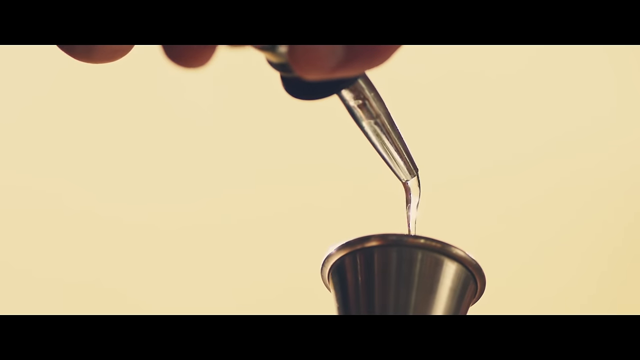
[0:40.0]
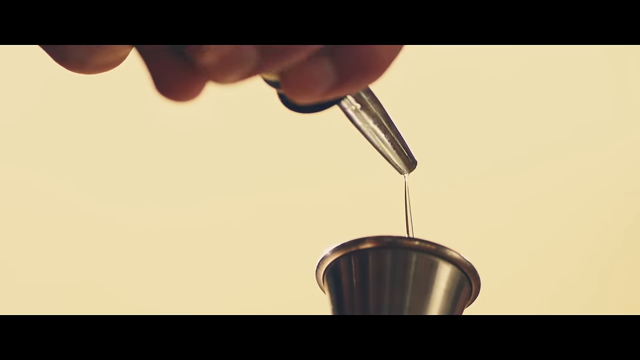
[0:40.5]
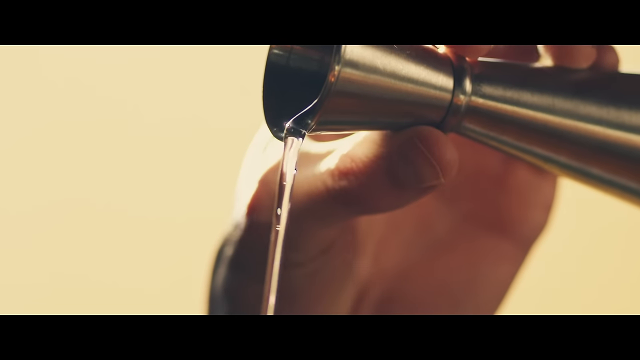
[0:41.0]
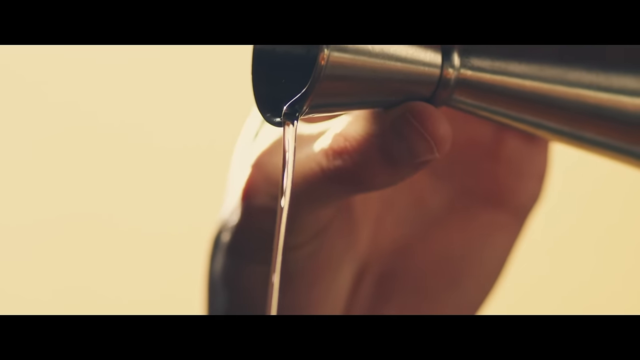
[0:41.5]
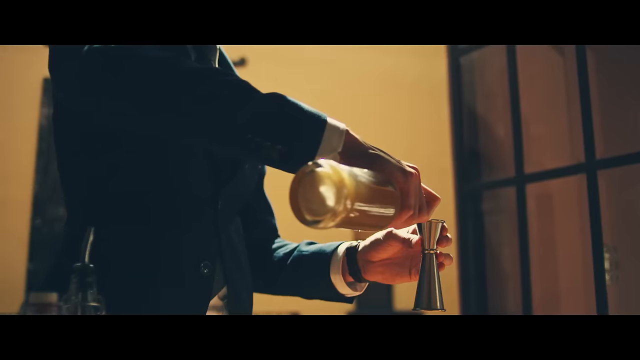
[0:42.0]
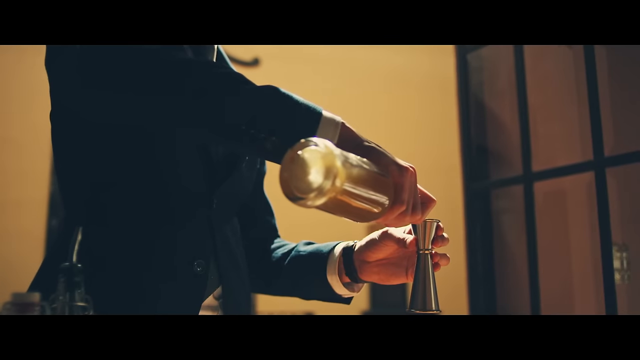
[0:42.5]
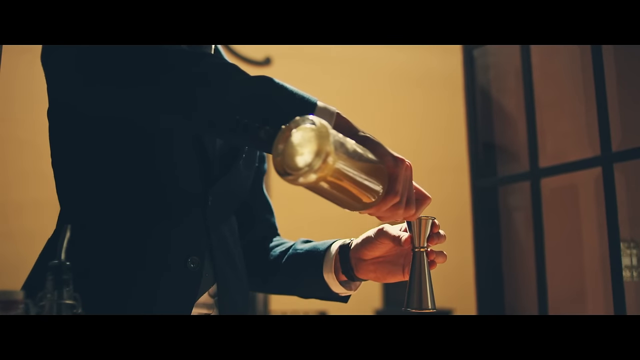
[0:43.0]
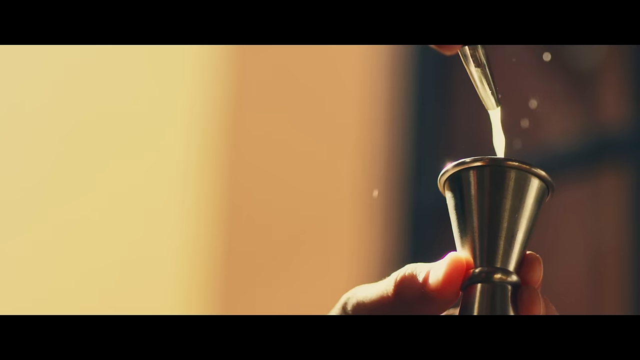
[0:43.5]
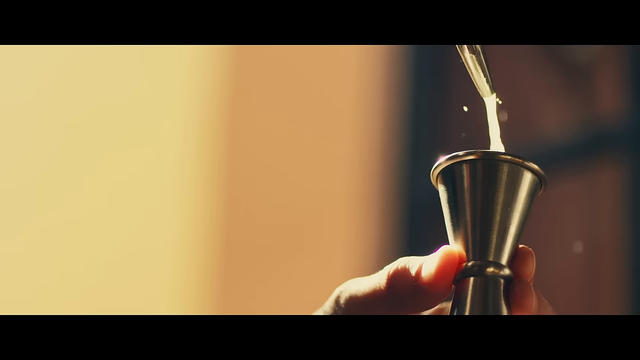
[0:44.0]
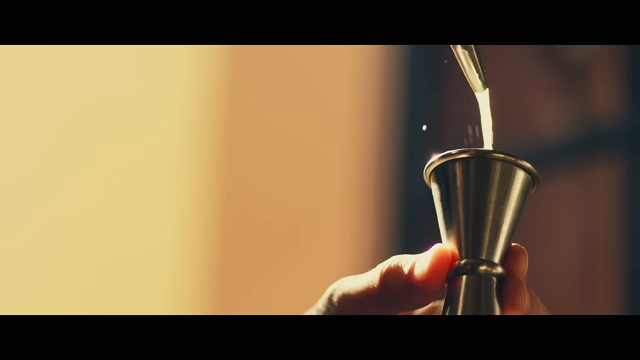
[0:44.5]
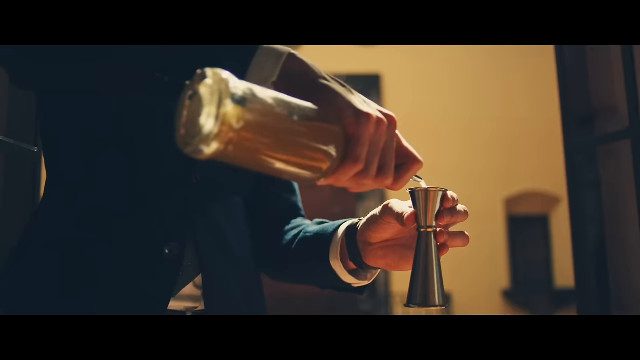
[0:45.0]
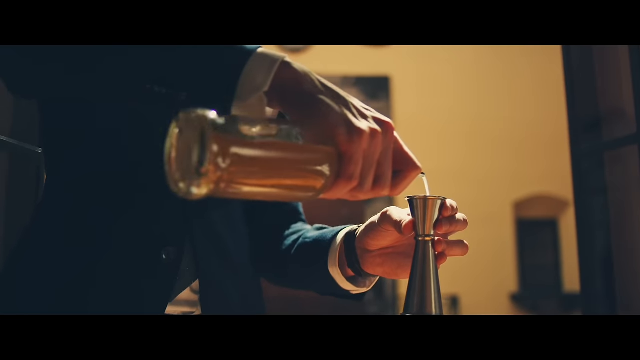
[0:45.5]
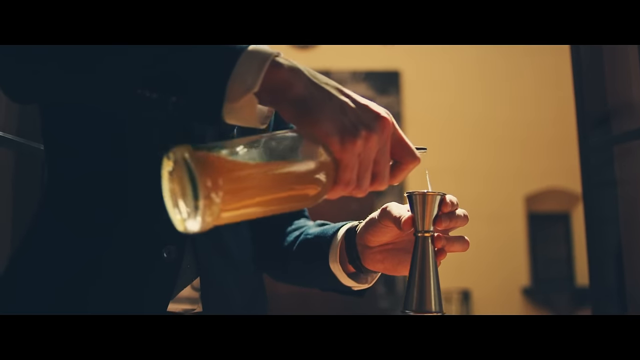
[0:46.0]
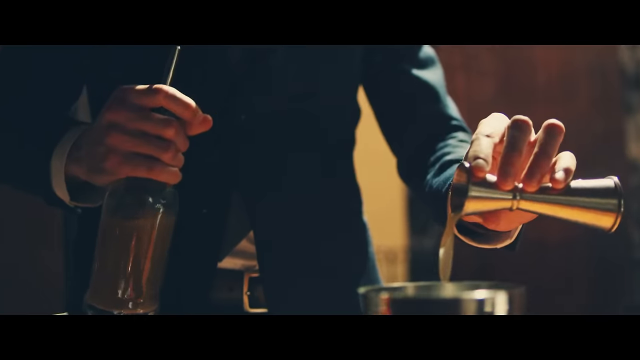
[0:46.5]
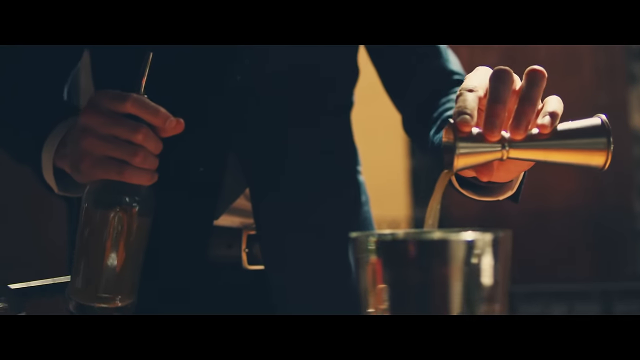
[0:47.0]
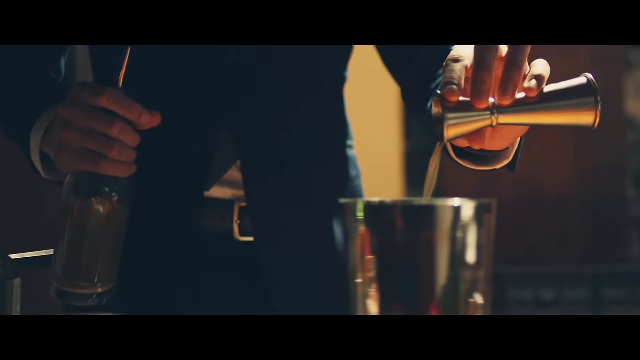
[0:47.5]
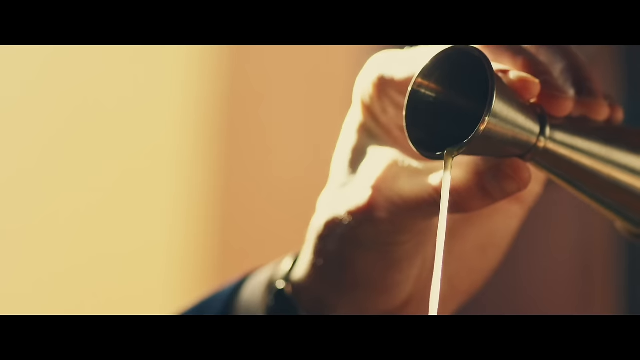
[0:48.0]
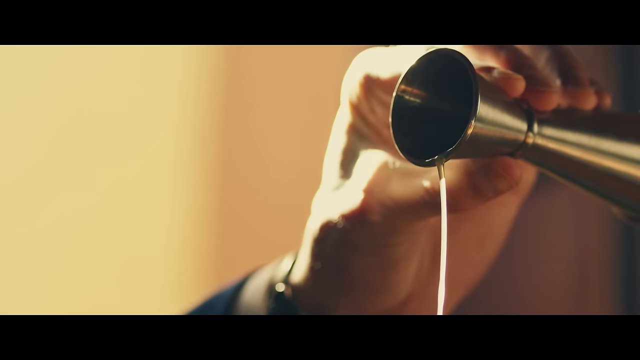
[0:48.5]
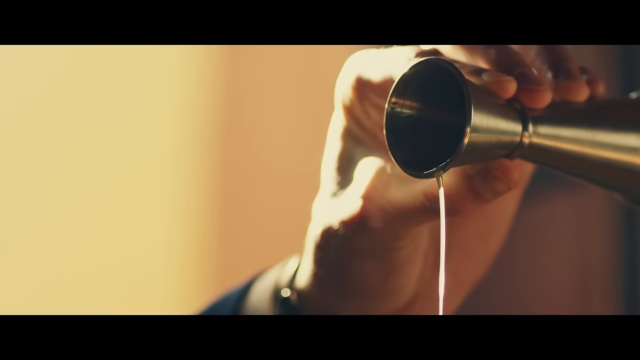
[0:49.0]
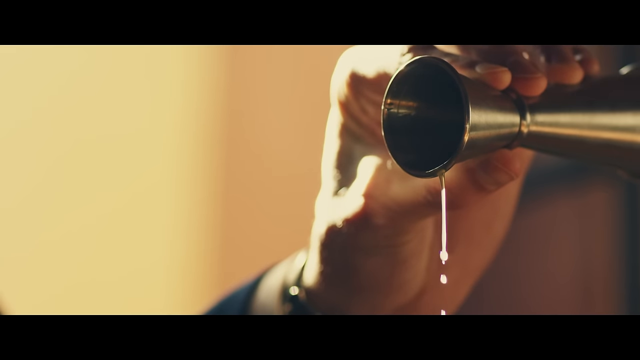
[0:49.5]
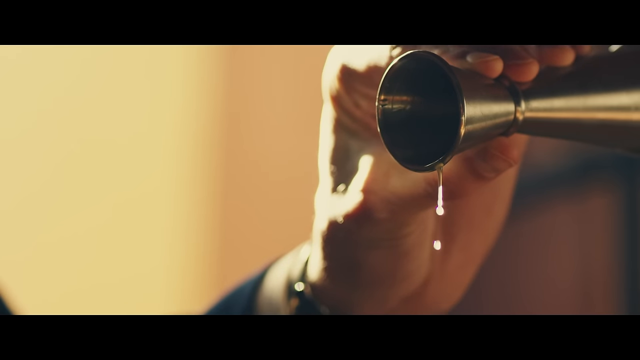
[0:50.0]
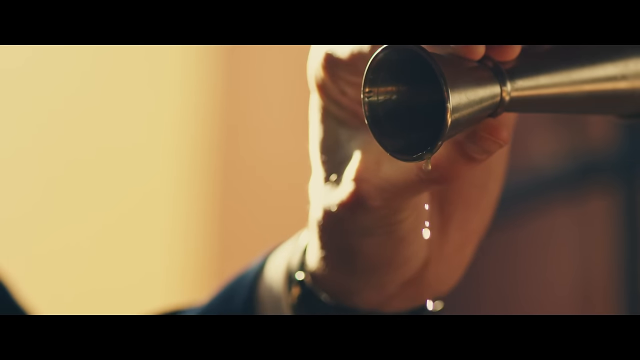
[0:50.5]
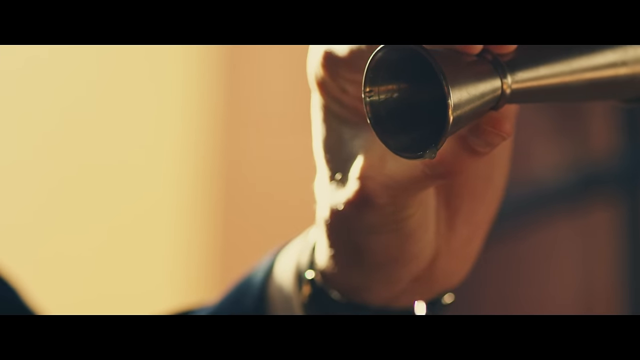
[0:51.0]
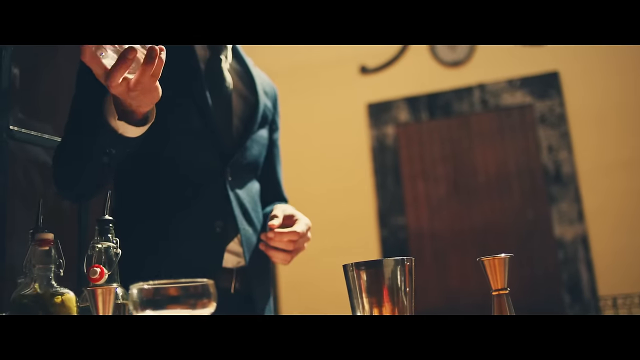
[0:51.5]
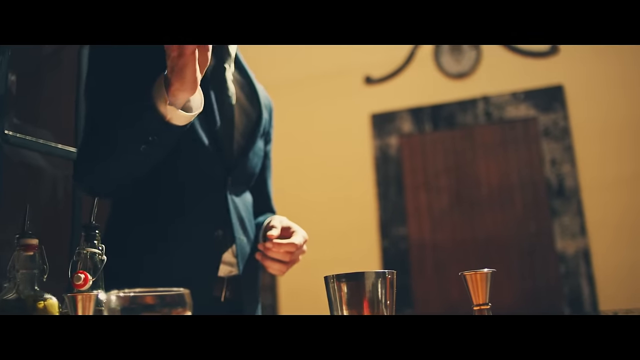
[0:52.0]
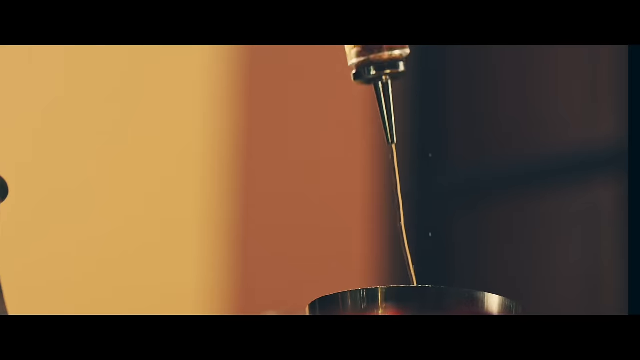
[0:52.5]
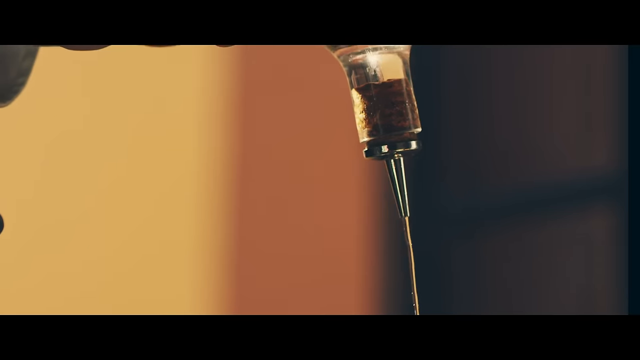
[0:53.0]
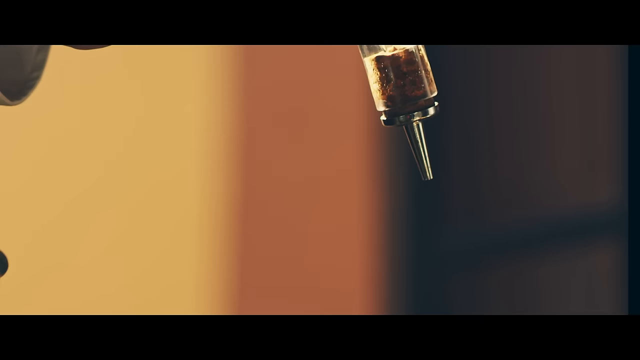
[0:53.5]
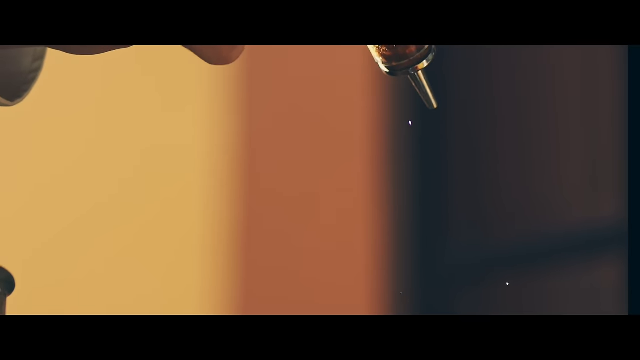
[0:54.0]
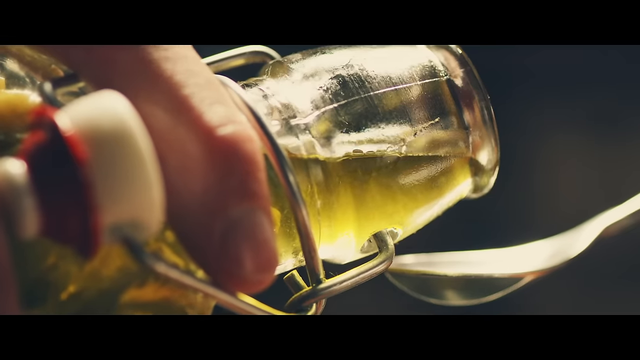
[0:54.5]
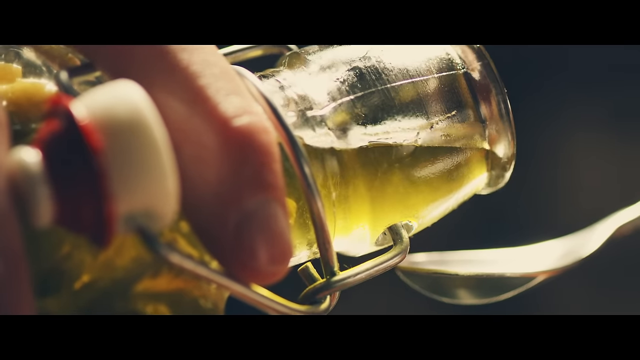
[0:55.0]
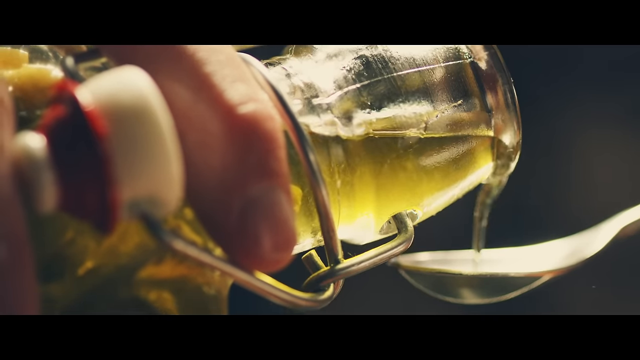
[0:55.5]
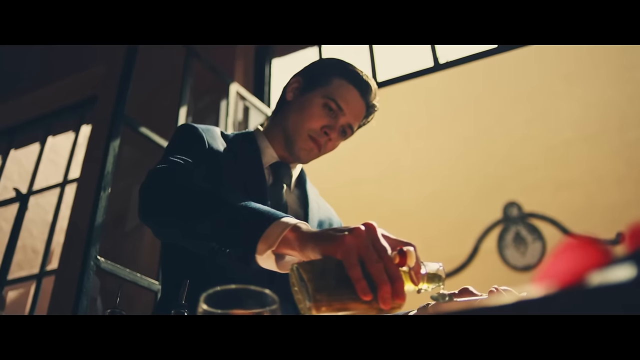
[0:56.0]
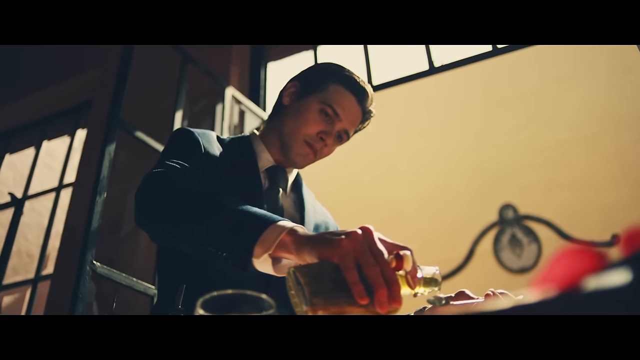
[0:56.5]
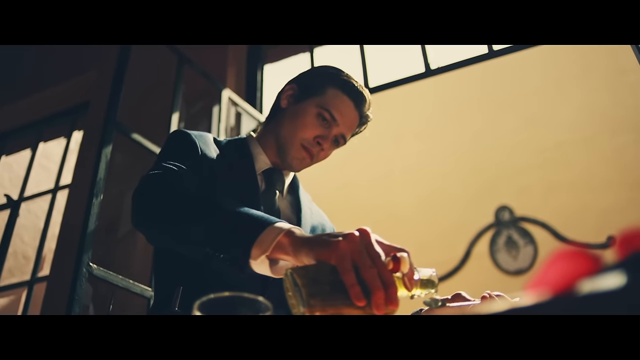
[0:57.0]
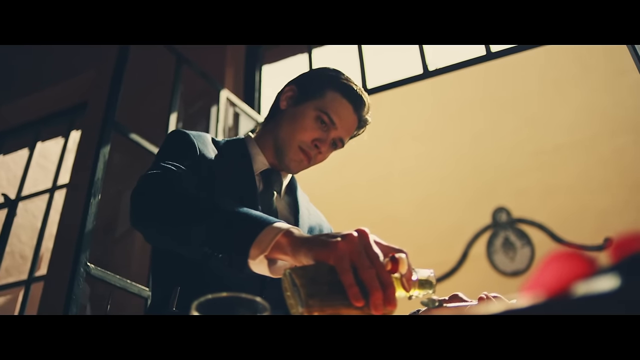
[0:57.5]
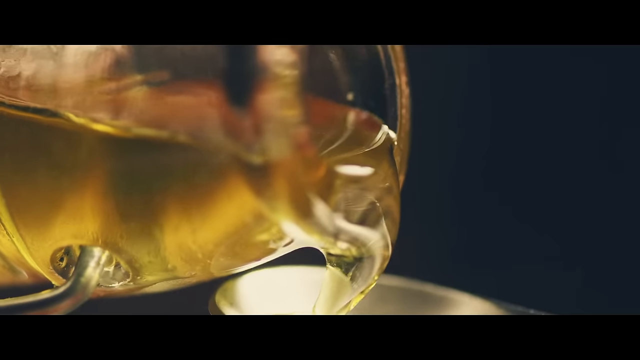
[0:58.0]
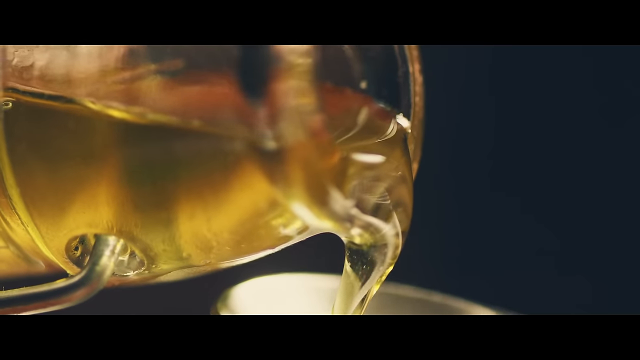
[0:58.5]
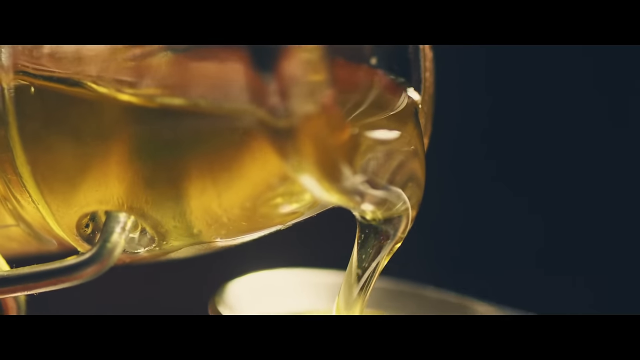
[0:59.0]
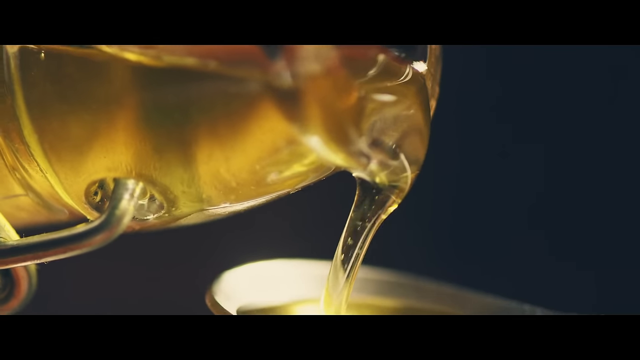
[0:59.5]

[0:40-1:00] One of the ingredients is poured into a stainless steel shot glass, and the man continues to put his ingredients in.